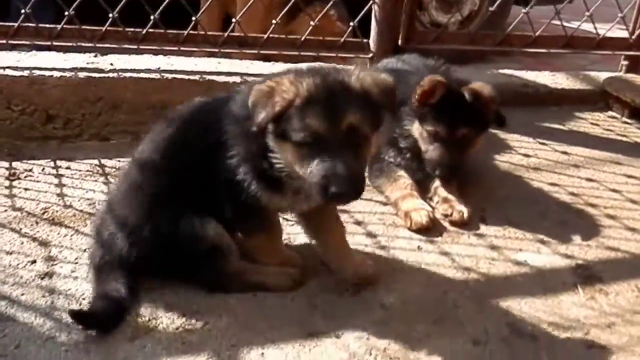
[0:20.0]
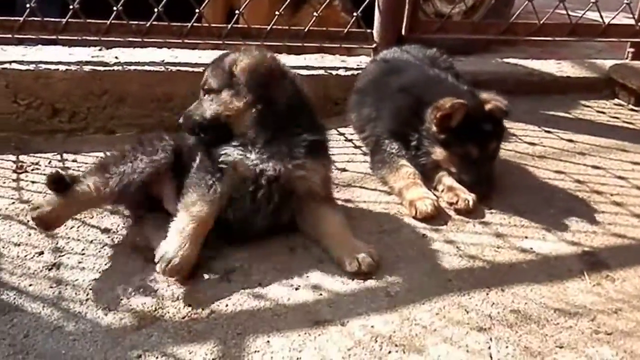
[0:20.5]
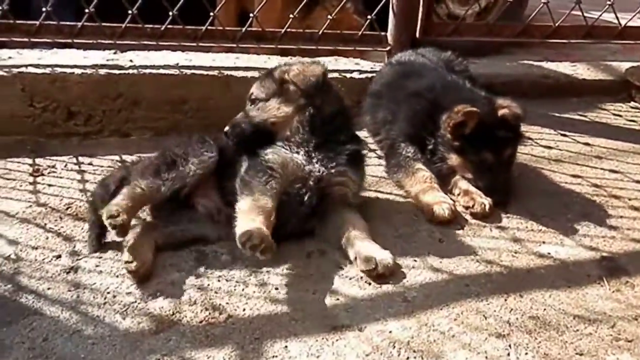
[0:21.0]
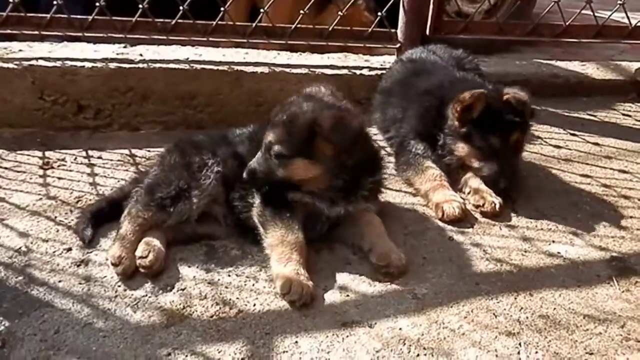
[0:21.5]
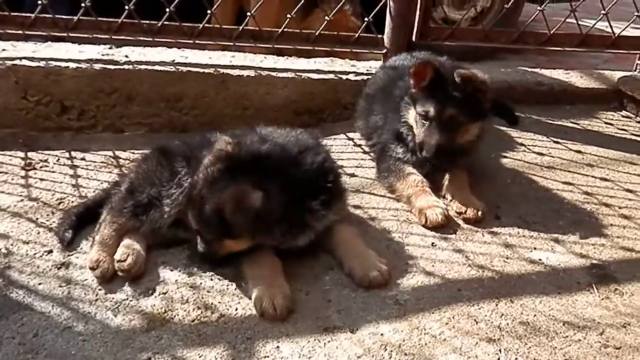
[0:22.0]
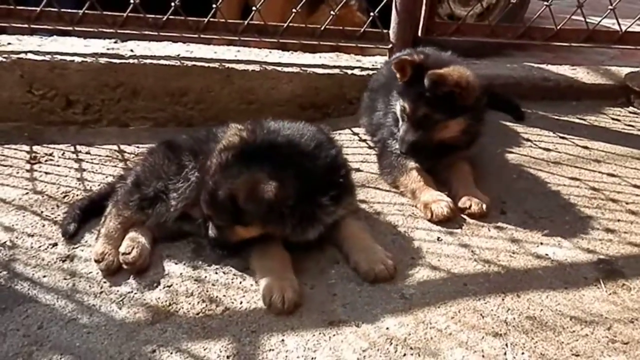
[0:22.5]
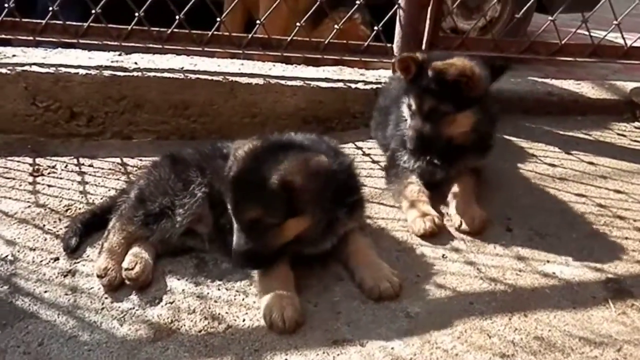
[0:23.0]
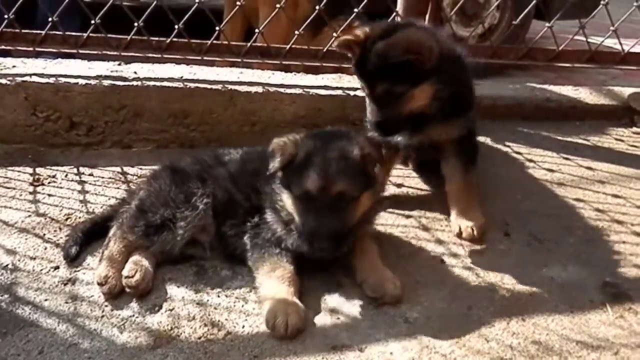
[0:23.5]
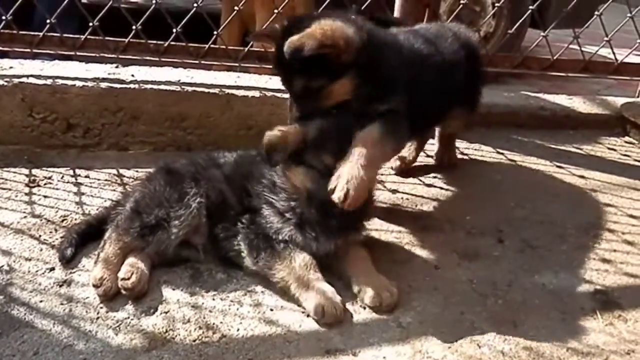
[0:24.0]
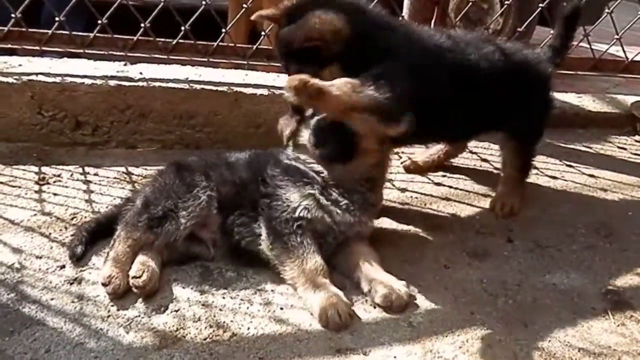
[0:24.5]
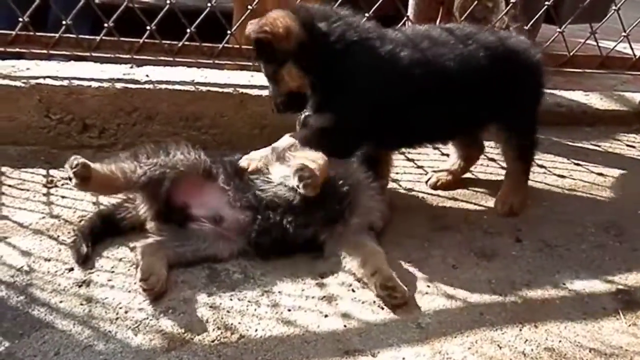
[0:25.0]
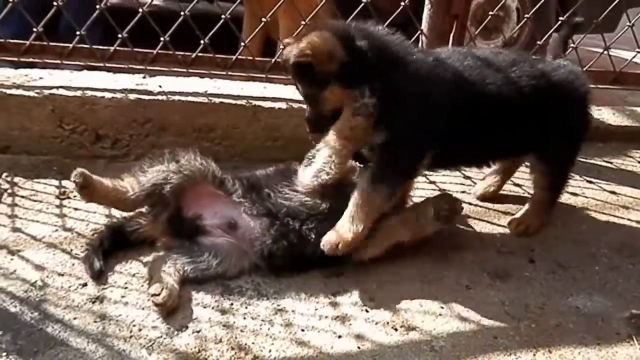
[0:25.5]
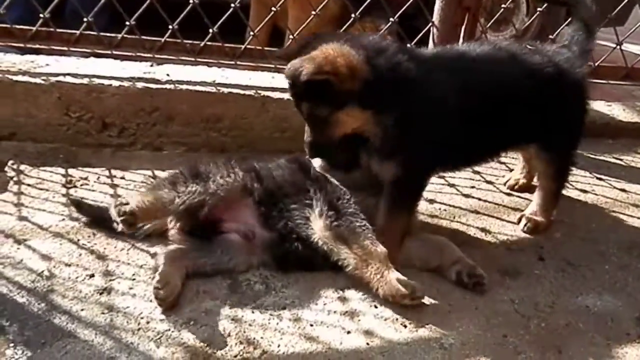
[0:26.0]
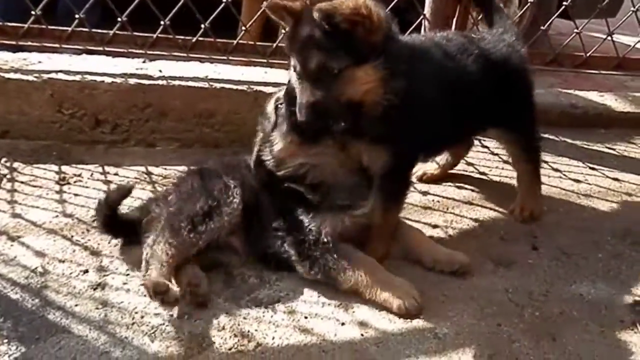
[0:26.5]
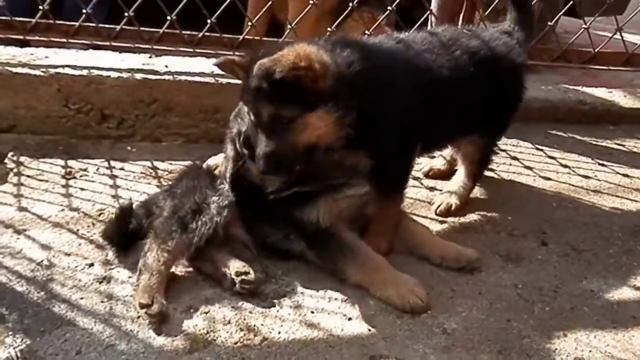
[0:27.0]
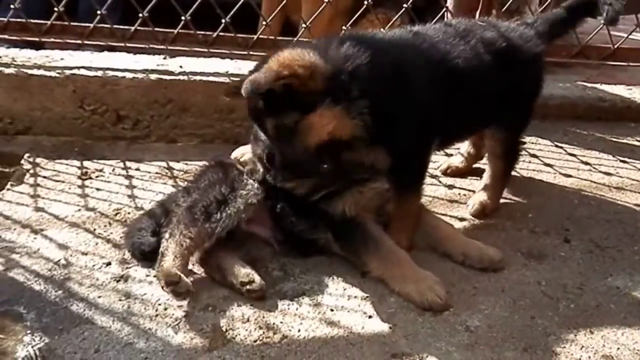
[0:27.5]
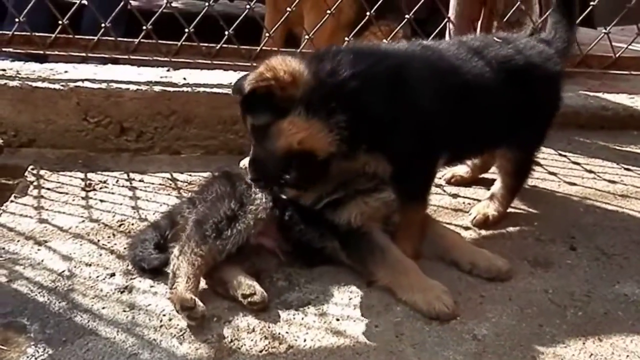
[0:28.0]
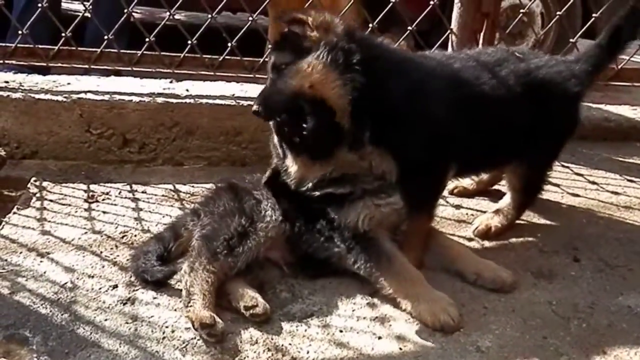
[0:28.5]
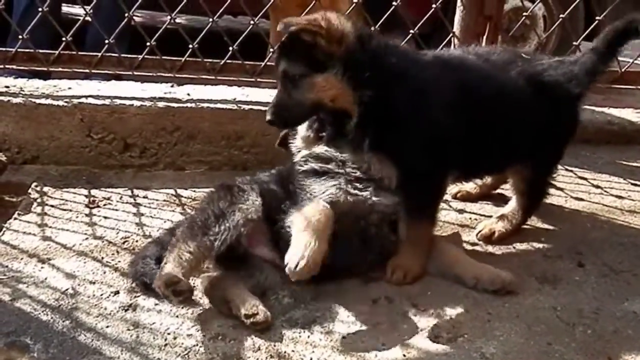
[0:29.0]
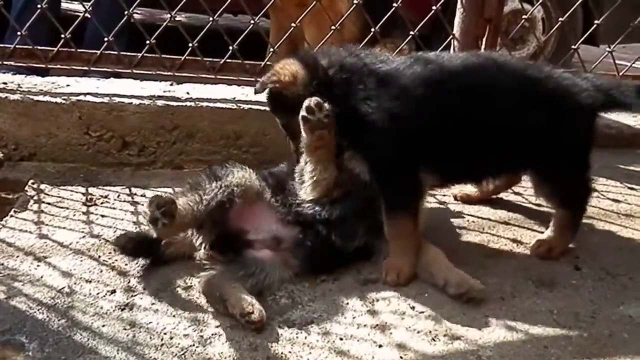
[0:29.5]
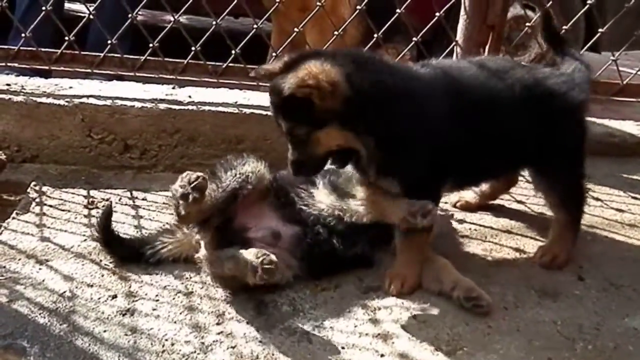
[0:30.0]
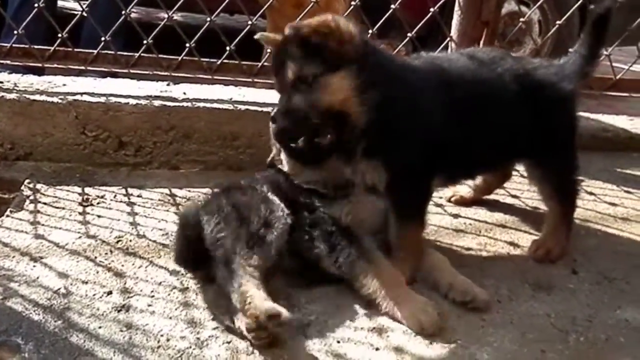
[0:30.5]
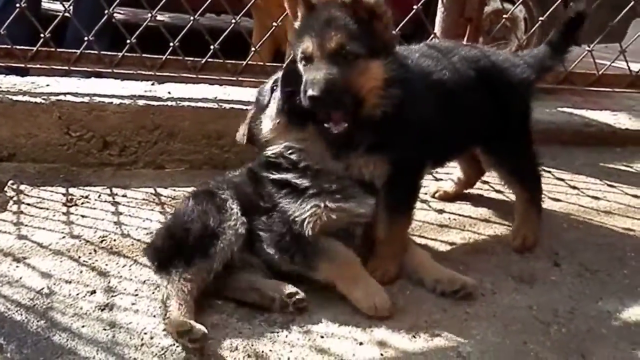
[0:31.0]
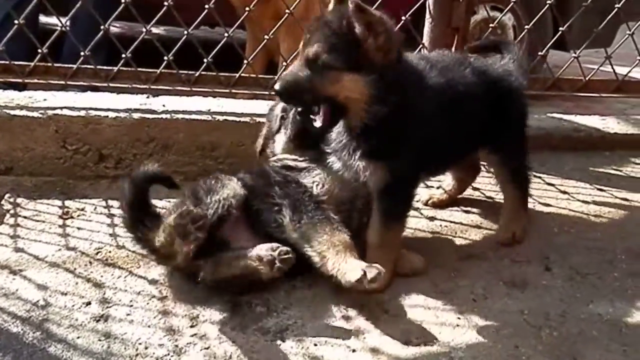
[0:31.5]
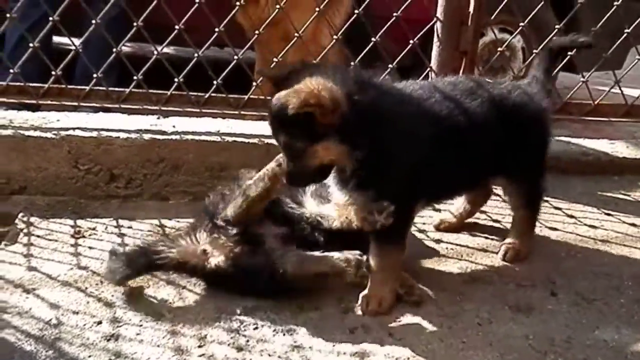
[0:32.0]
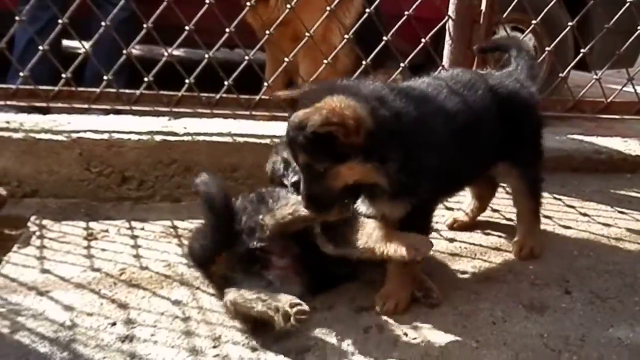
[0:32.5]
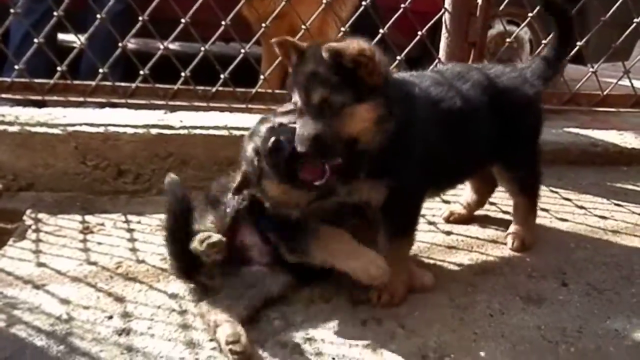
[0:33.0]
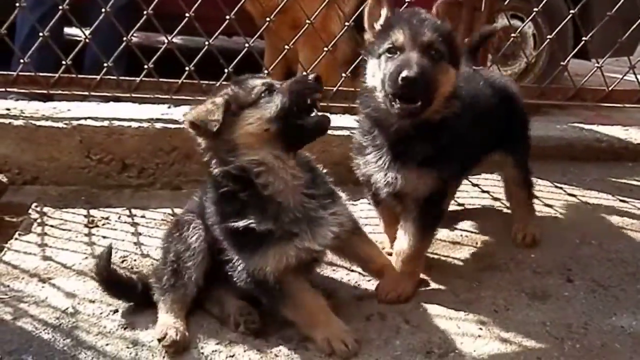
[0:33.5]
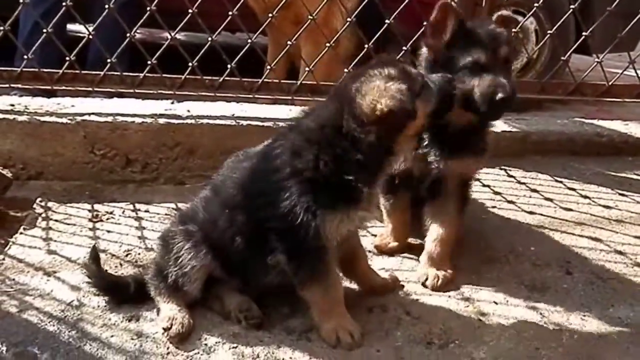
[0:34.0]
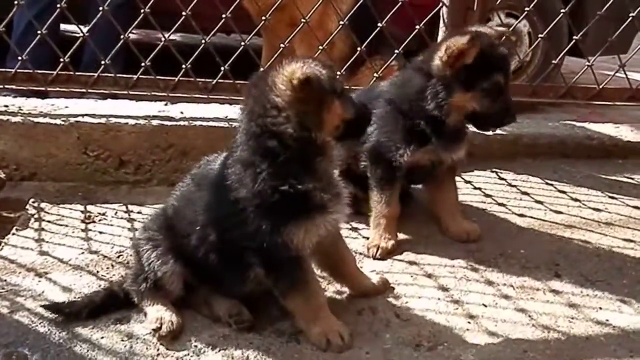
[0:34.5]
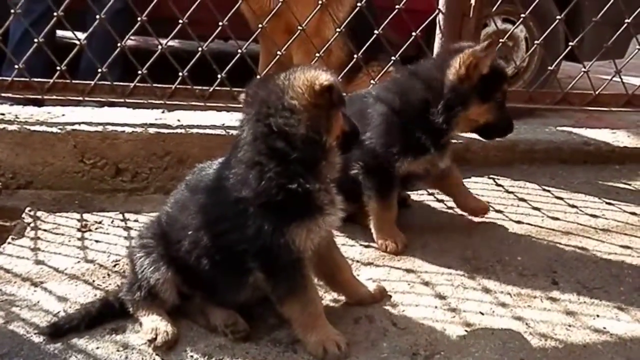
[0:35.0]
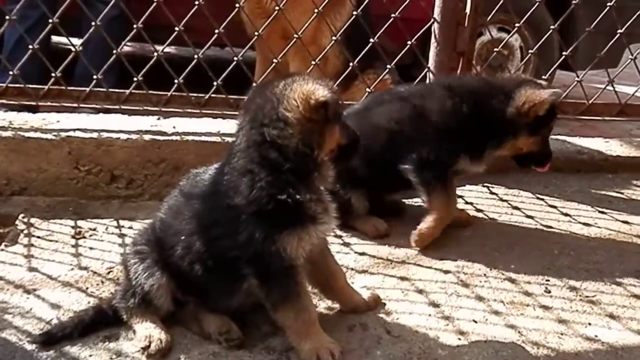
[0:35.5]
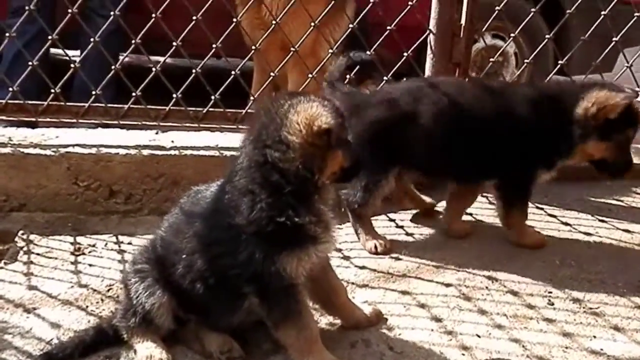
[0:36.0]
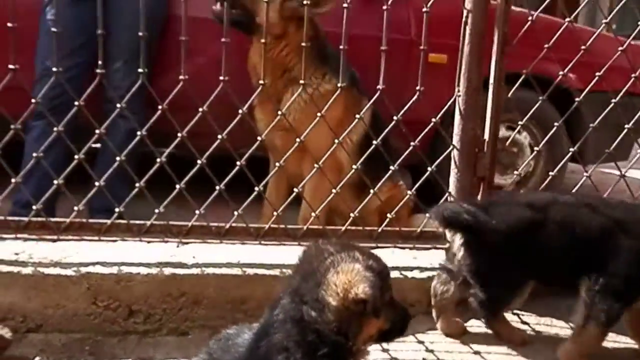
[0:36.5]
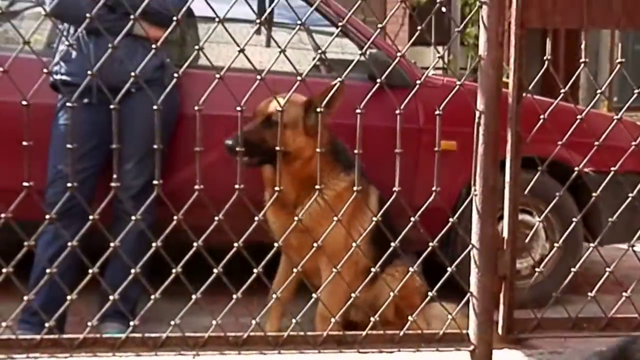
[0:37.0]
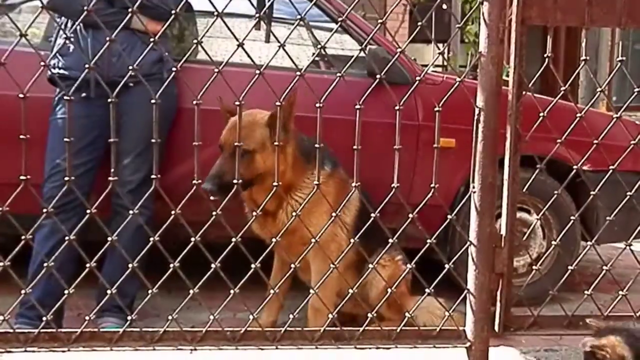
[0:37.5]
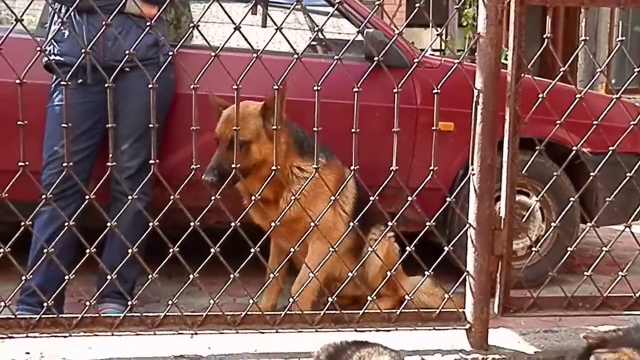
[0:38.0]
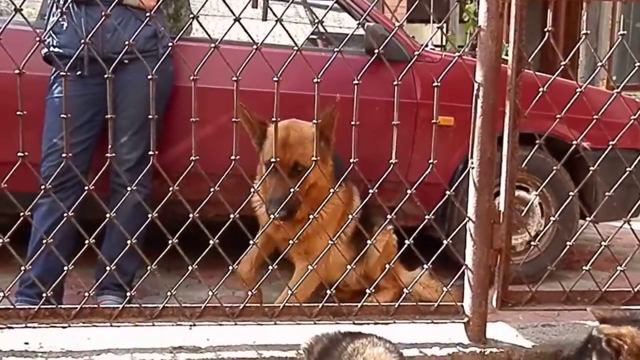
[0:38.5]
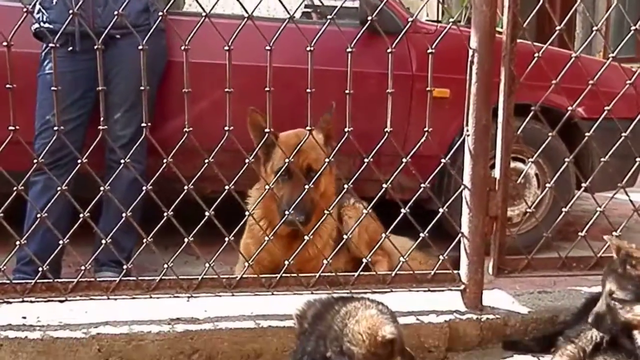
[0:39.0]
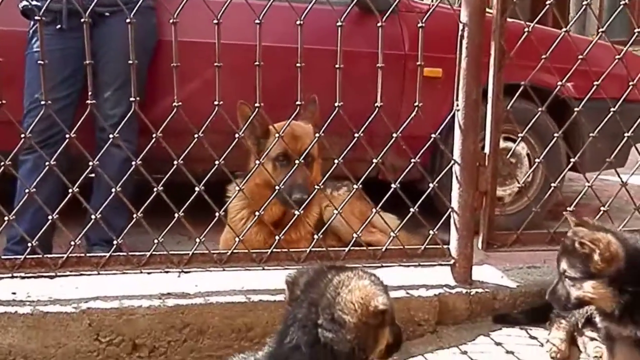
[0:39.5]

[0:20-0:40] Two black dogs, one of them male, play together on a pavement that seems to be inside their yard. They stop for a moment, and the view shifts outside the yard, where a red car is parked. Next to the red car is another dog whose body is not all black; it has fawn coloring on most of it from the head toward the body. A person stands leaning on the red car. Their face is not shown, but they wear navy blue jeans and a navy blue jacket, and they keep standing there without moving.